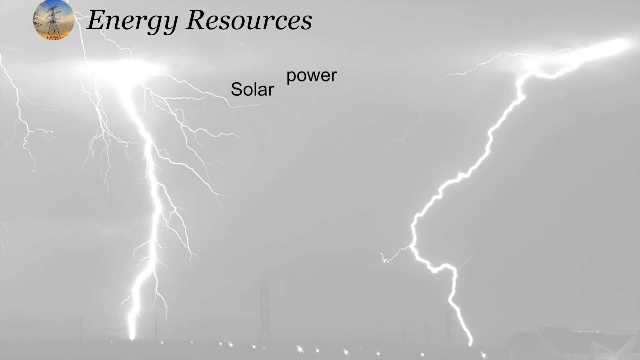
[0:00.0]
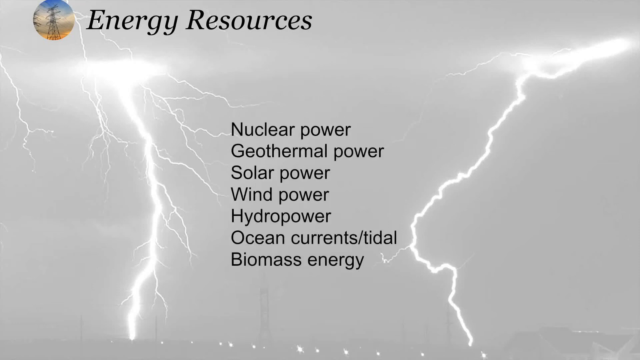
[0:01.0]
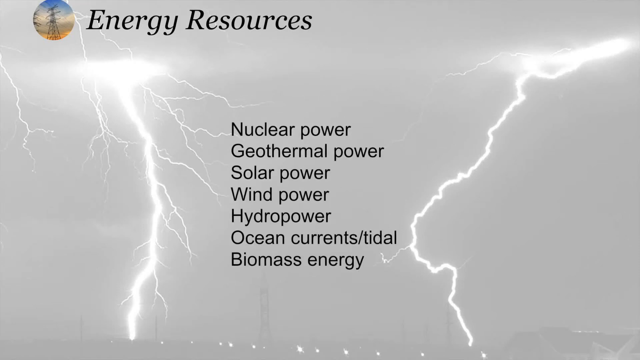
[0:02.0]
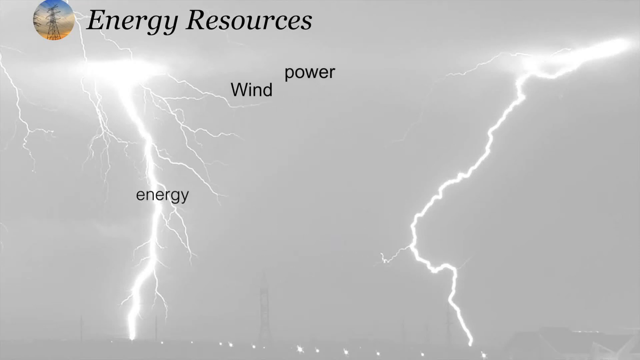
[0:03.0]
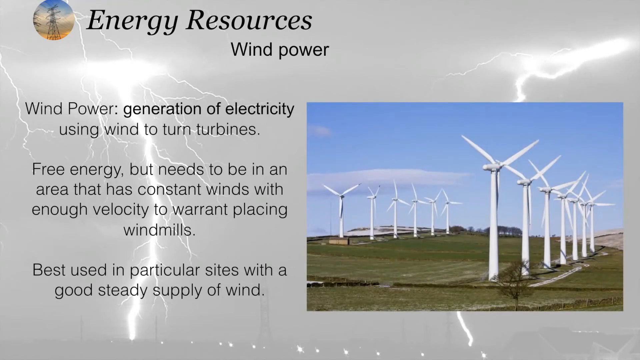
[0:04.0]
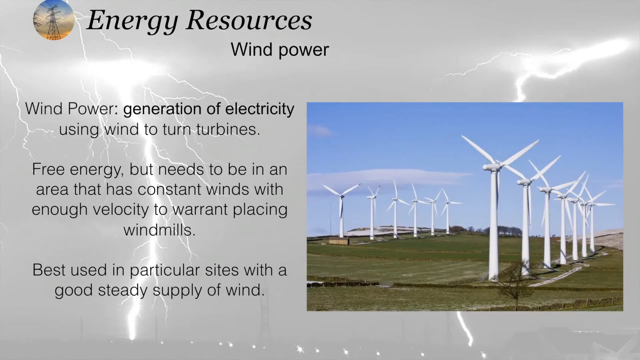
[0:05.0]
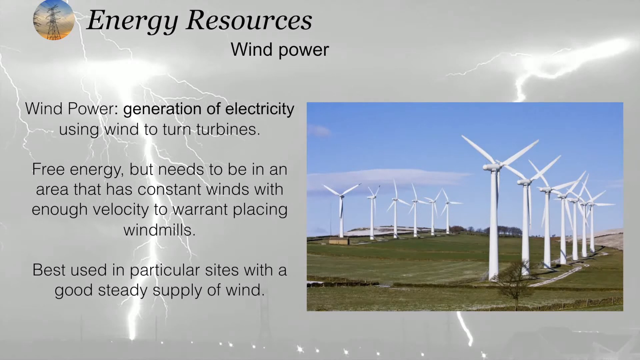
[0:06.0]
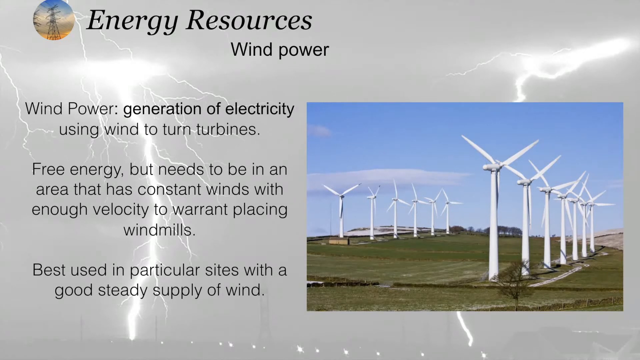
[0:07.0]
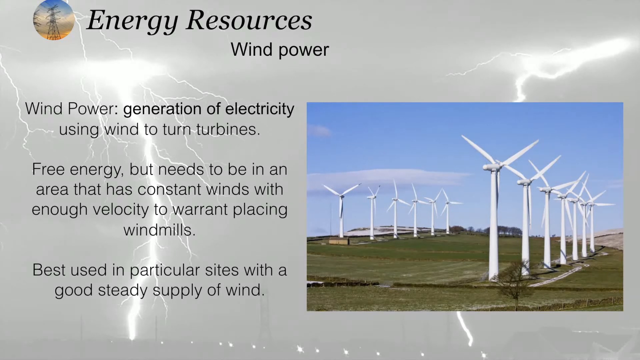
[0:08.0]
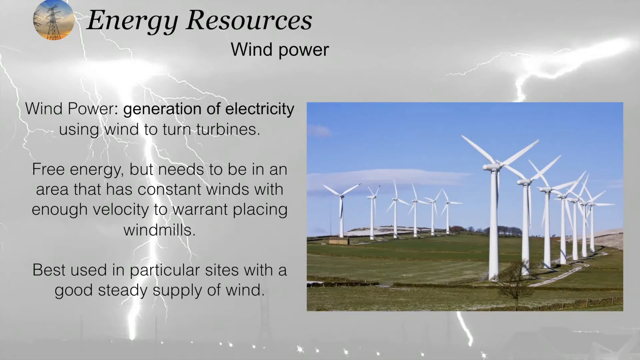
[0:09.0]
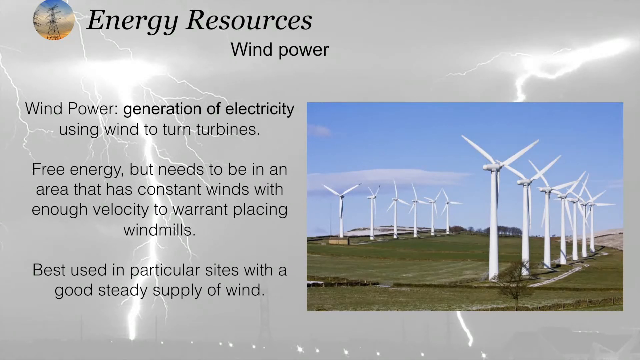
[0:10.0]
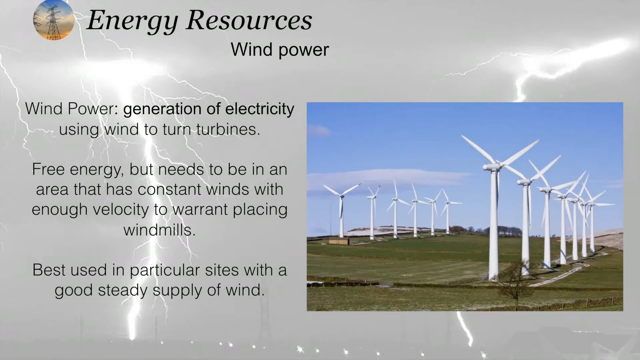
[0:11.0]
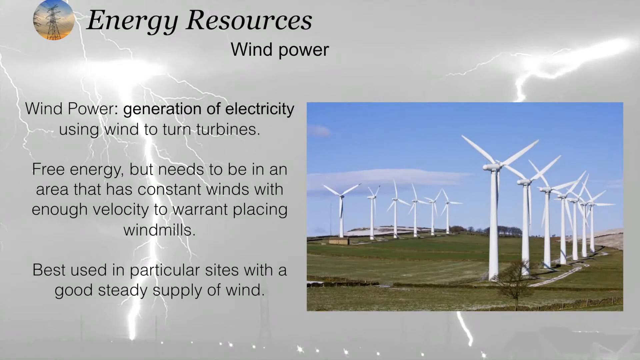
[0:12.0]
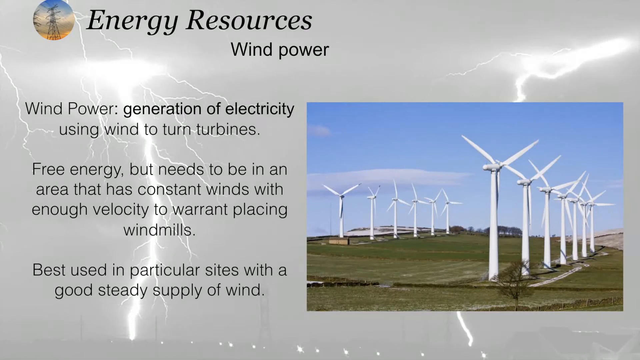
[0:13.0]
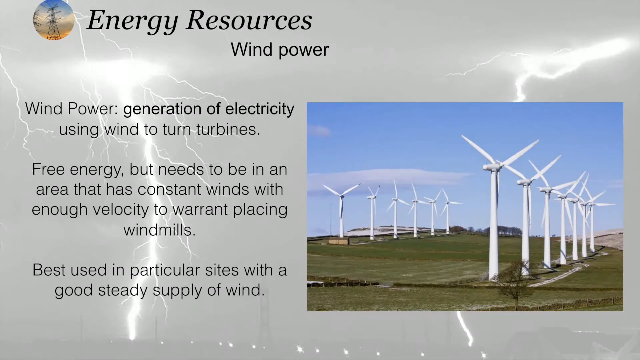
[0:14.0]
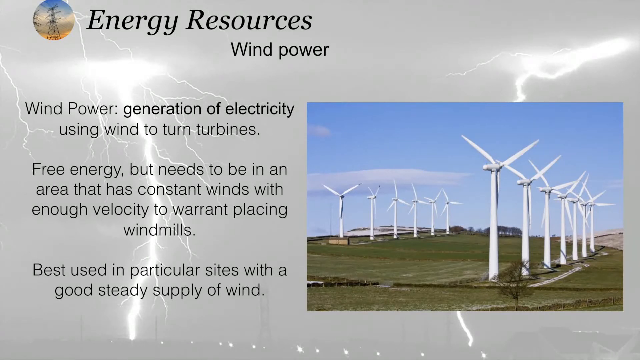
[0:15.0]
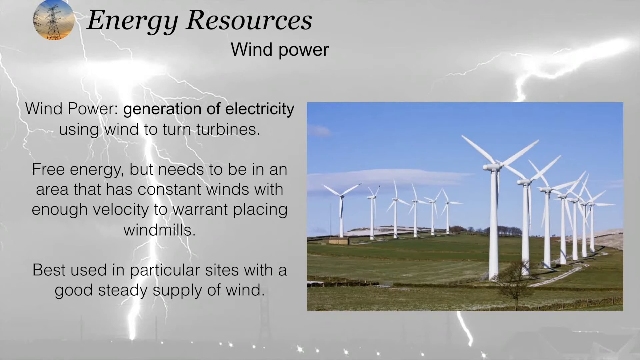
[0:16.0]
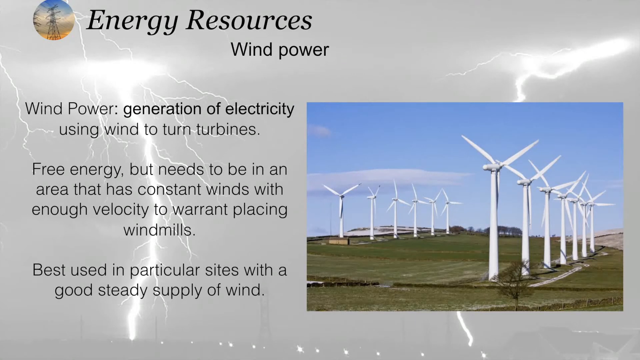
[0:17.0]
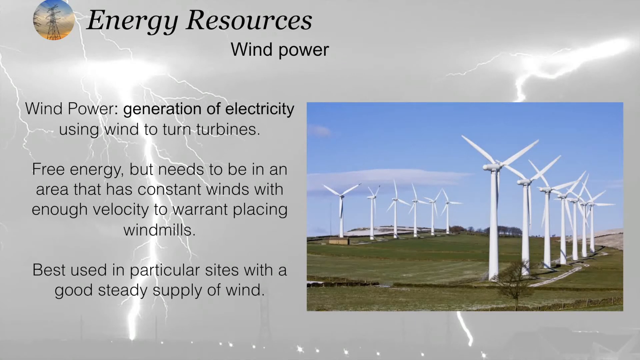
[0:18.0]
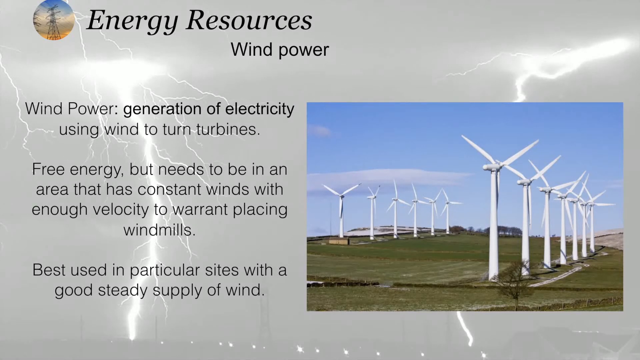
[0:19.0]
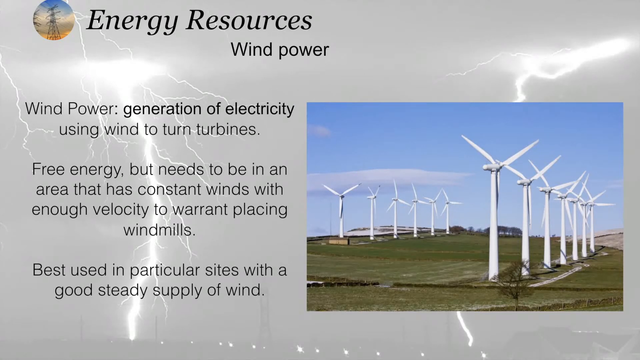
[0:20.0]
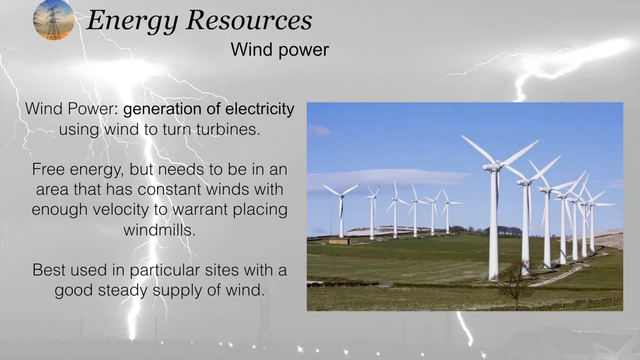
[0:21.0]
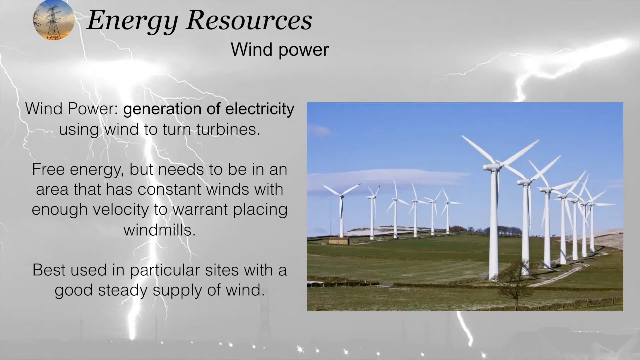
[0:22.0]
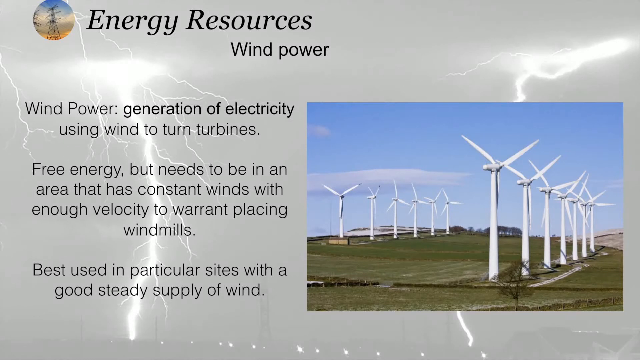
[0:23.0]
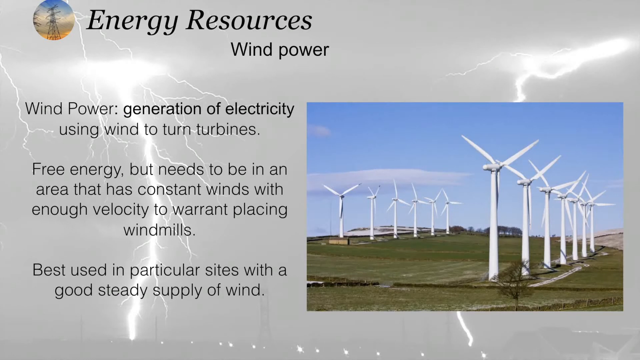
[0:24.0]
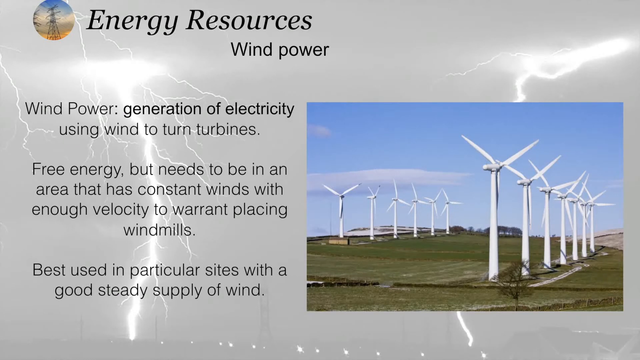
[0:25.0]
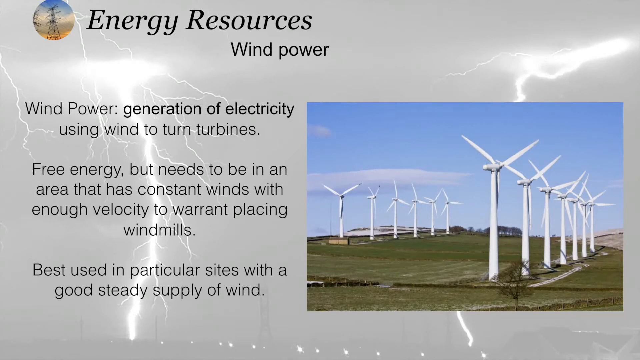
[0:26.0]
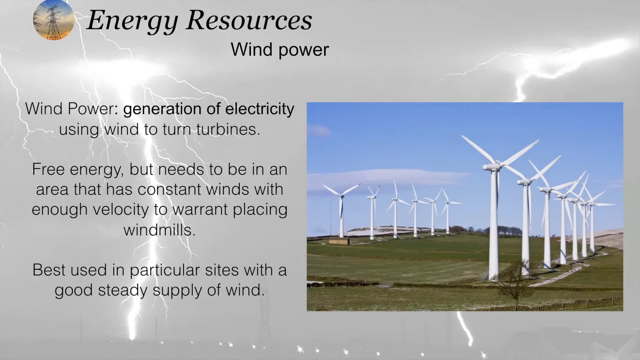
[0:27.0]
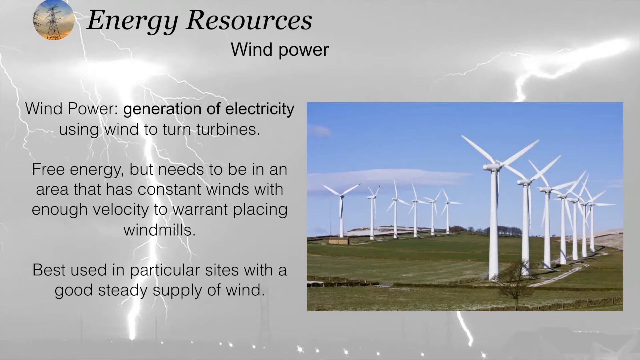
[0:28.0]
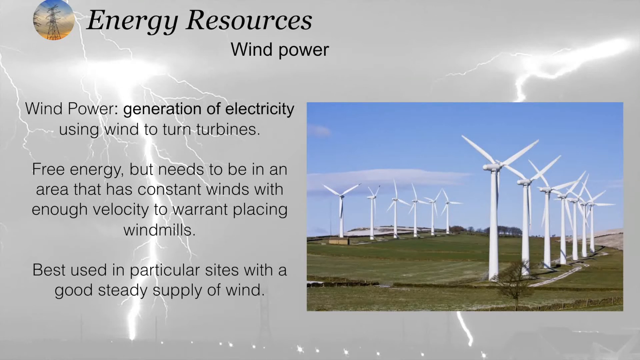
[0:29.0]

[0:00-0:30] The video is about energy resources. In the top left corner is a profile picture showing a little blue sky, apparently clouds and the ground, and a big, huge electrical power pole of the metal kind, not the wooden kind. To its right, big, bold black lettering reads "energy resources." Below that and slightly to the right, "power" appears in black, with "solar" right beside it to the left. Down the left and right sides, about two inches in, are big lightning strikes; the one on the left has about seven or eight little pieces breaking off it. "Solar" and "power" then move down, and rows of black lettering appear: "nuclear power," "geothermal power," "solar power," "wind power," "hydropower," "ocean currents / tidal," and "biomass energy." The sky is a grayish color. "Wind" and "power" then move up under "resources." Below that are the definition for wind power and "free energy," followed by another two lines of information. On the right side is a square showing a blue sky with a few clouds, six white windmills in the back, six windmills down the right side, and green grass between and beside them. Each windmill has three blades.